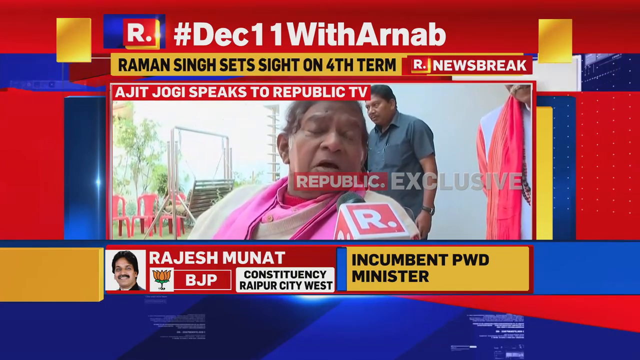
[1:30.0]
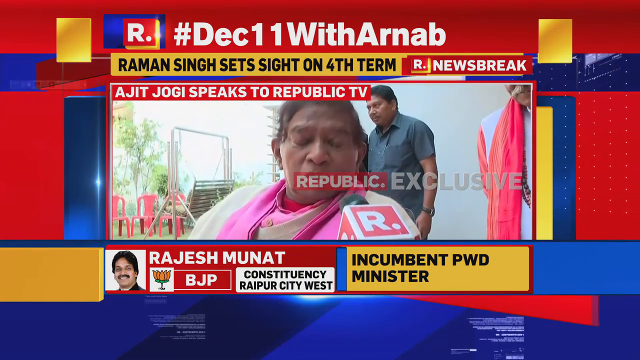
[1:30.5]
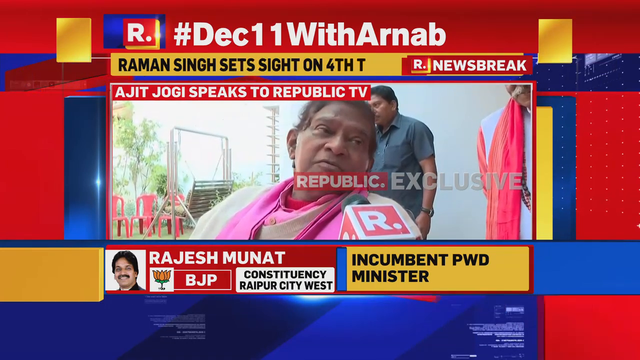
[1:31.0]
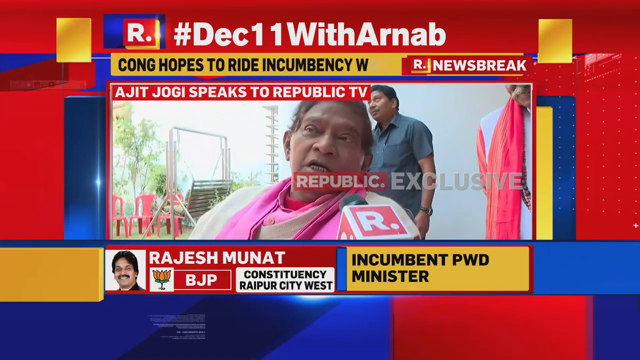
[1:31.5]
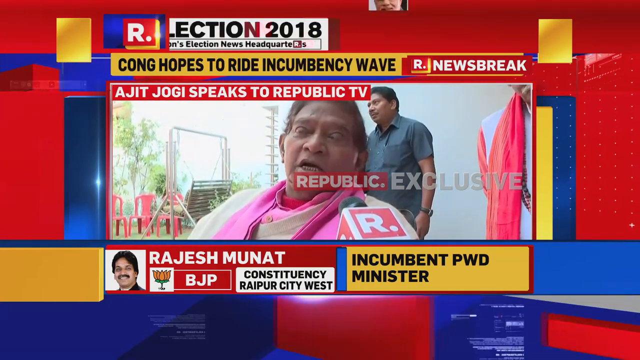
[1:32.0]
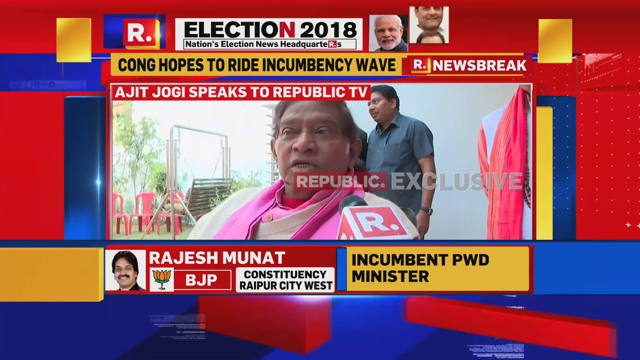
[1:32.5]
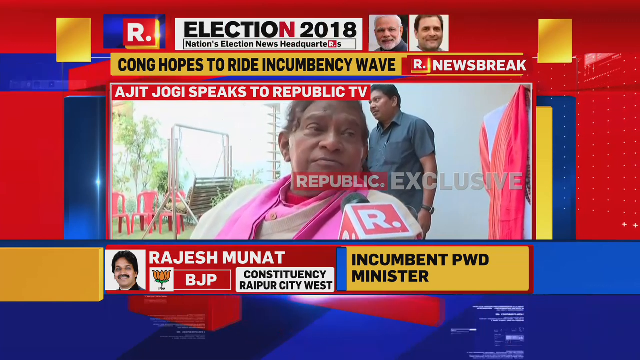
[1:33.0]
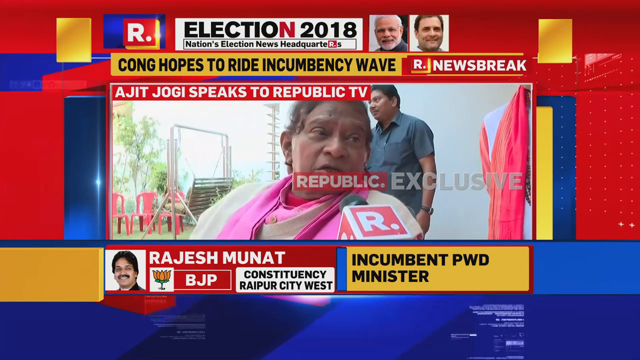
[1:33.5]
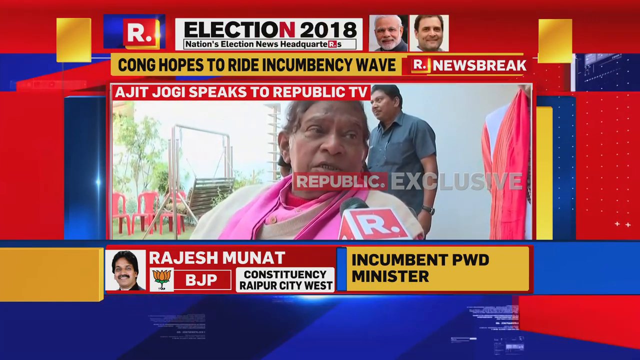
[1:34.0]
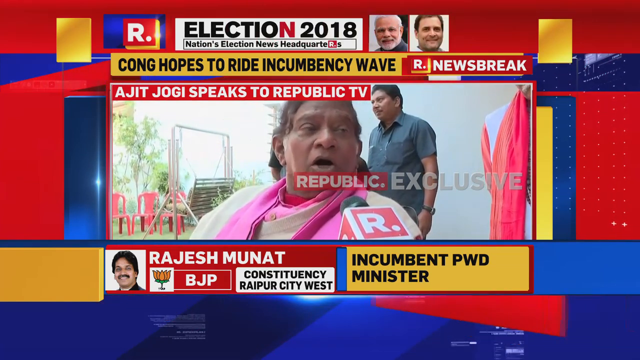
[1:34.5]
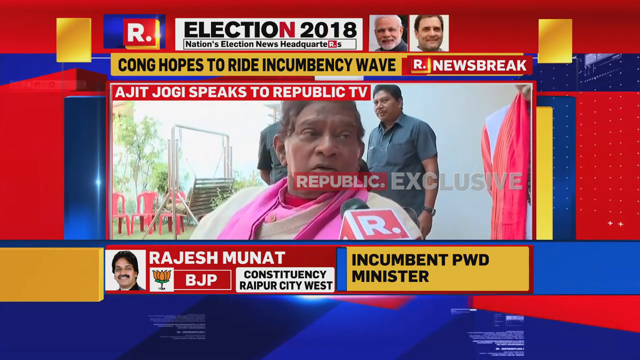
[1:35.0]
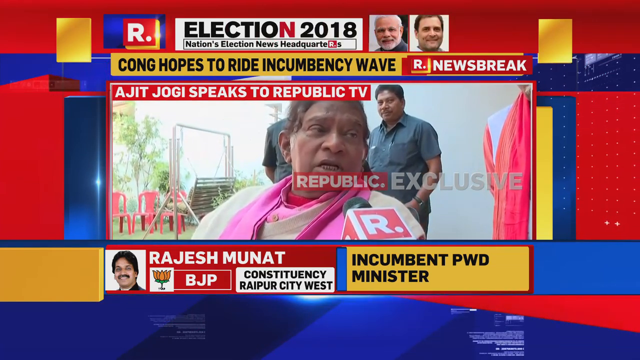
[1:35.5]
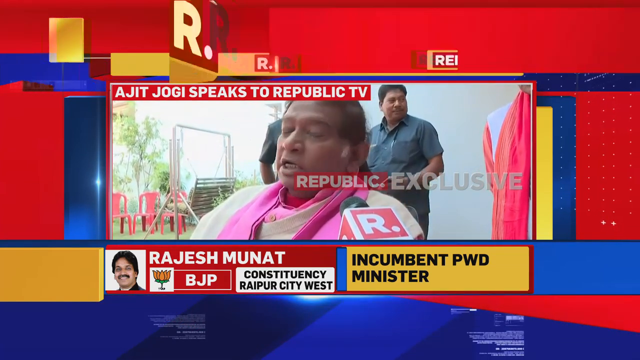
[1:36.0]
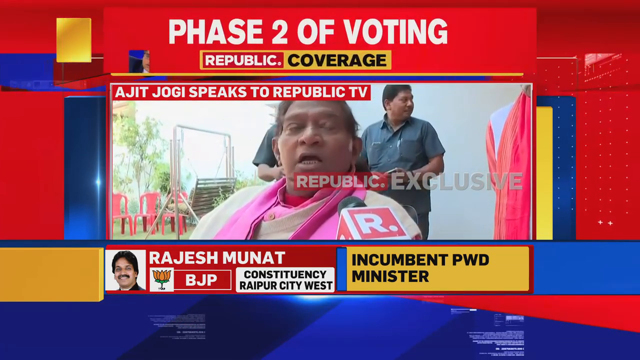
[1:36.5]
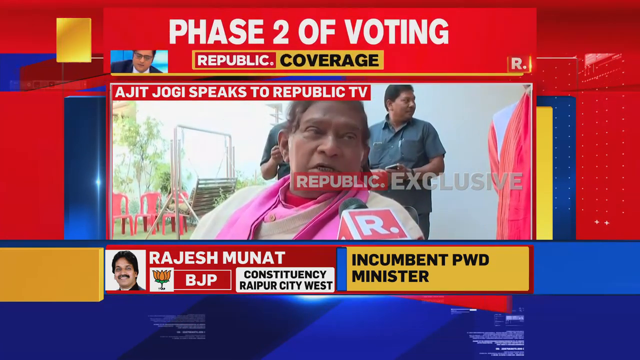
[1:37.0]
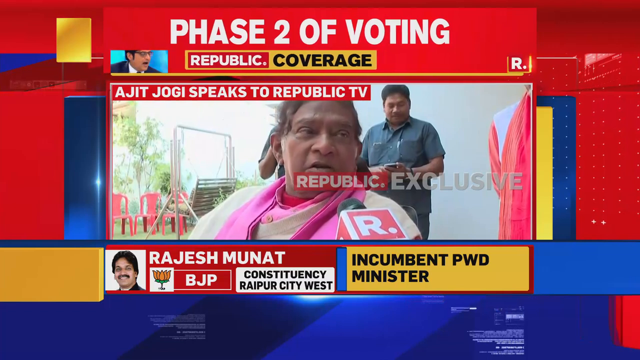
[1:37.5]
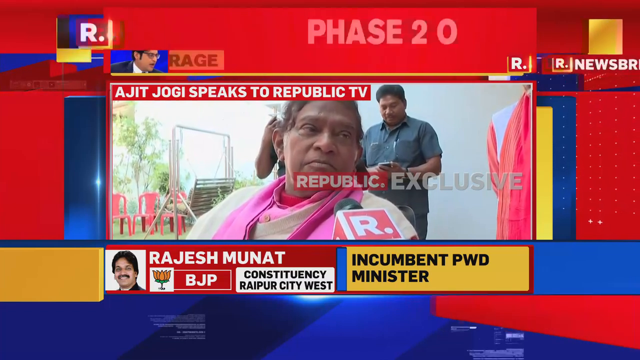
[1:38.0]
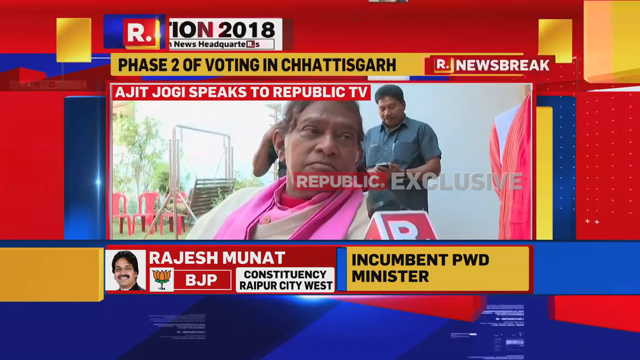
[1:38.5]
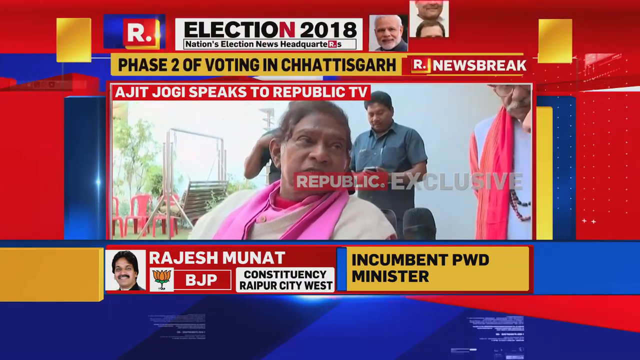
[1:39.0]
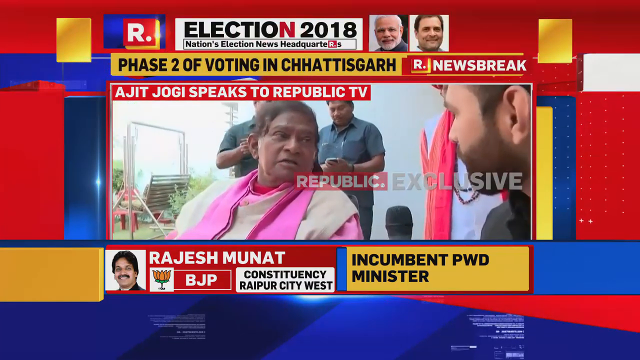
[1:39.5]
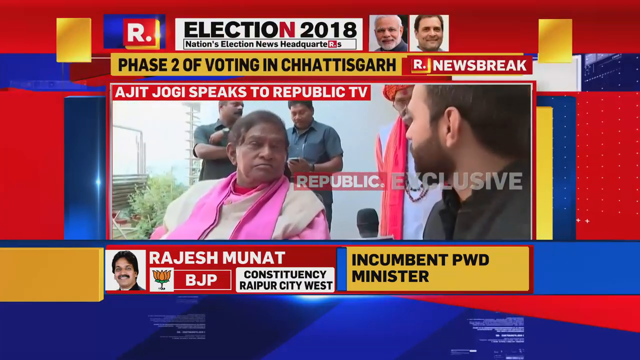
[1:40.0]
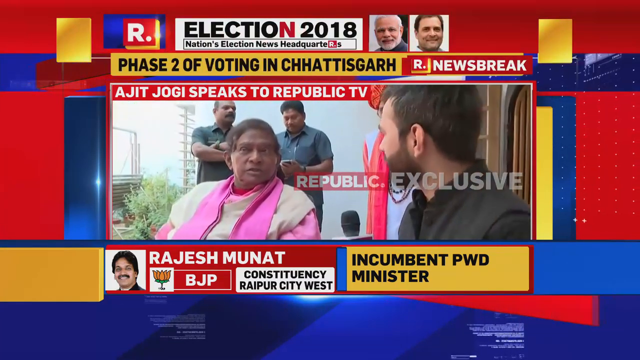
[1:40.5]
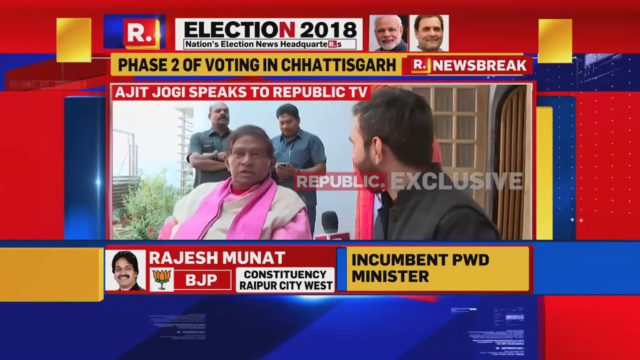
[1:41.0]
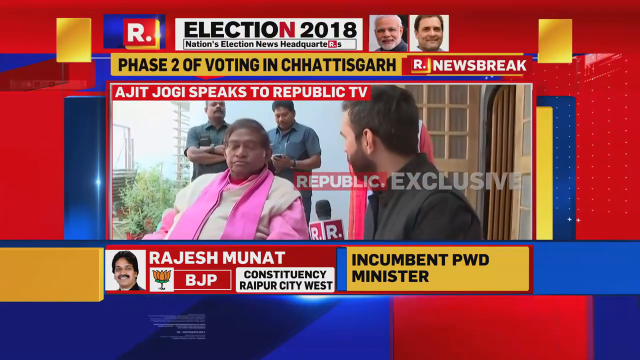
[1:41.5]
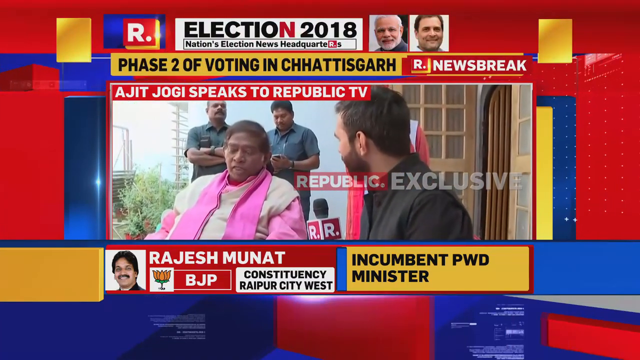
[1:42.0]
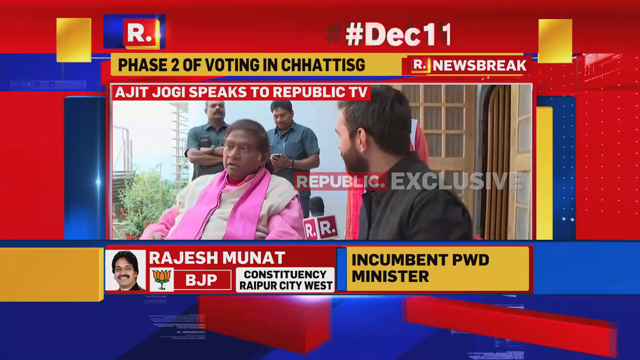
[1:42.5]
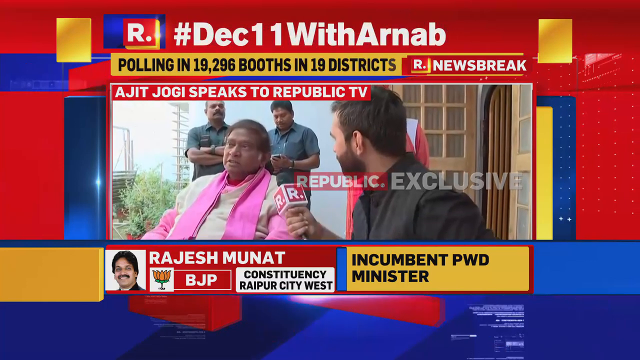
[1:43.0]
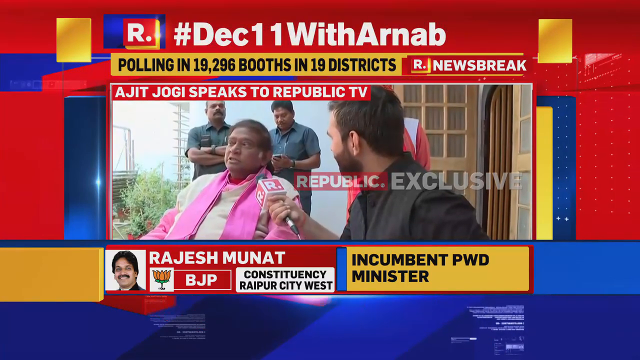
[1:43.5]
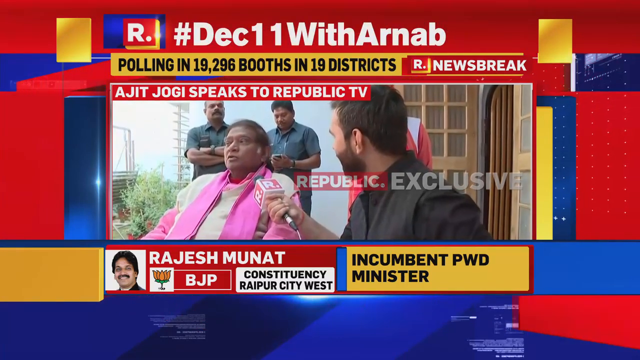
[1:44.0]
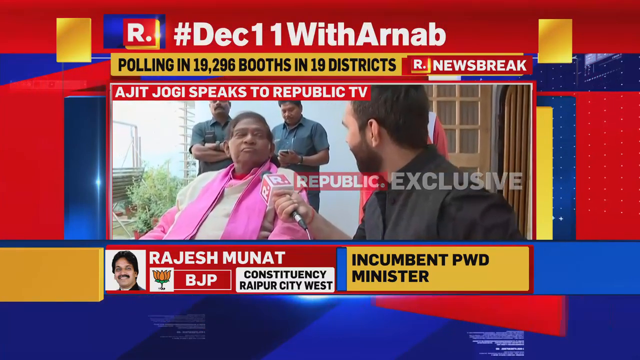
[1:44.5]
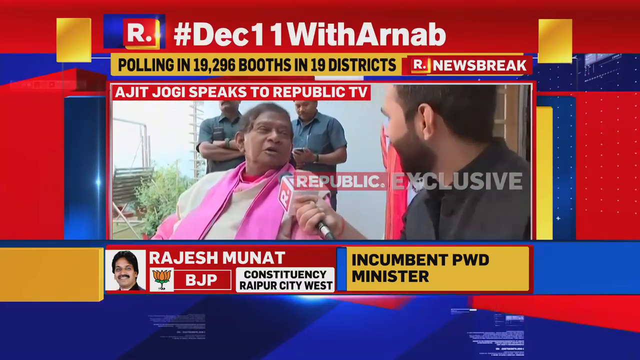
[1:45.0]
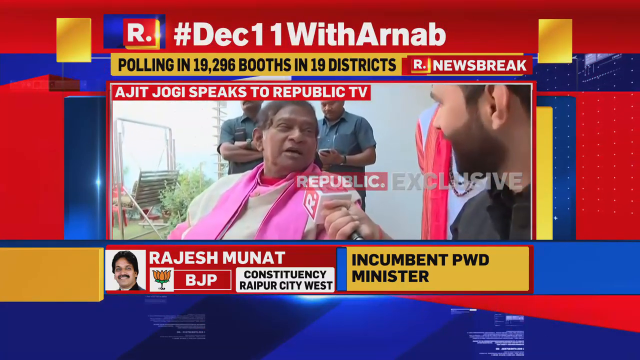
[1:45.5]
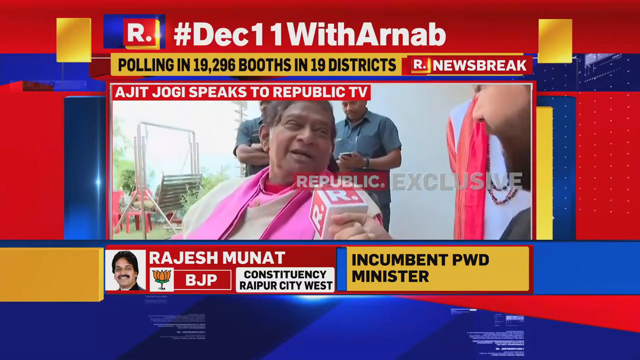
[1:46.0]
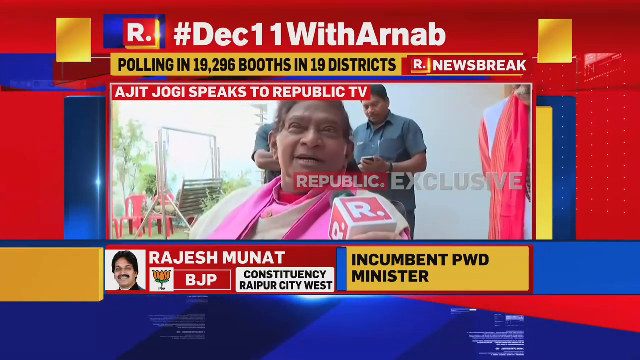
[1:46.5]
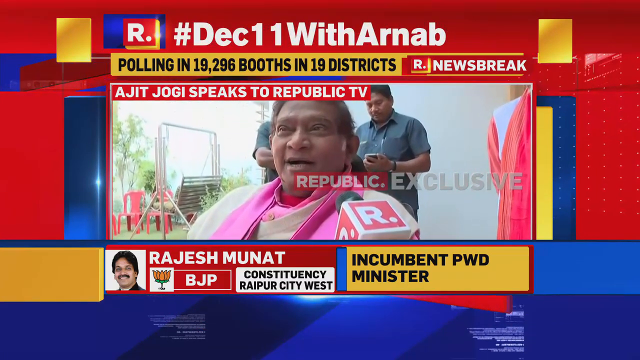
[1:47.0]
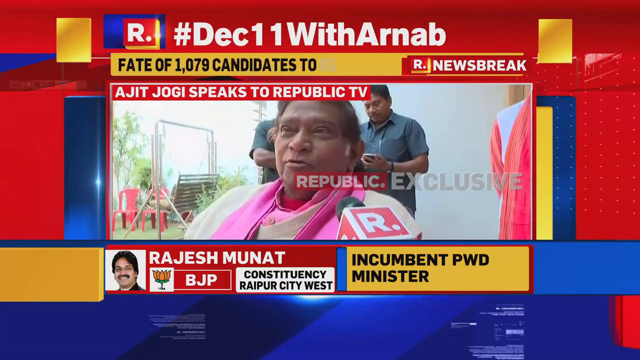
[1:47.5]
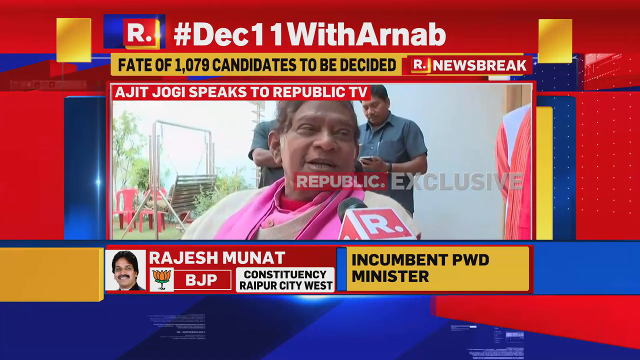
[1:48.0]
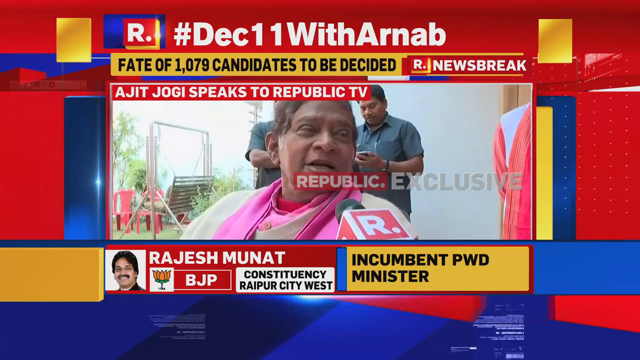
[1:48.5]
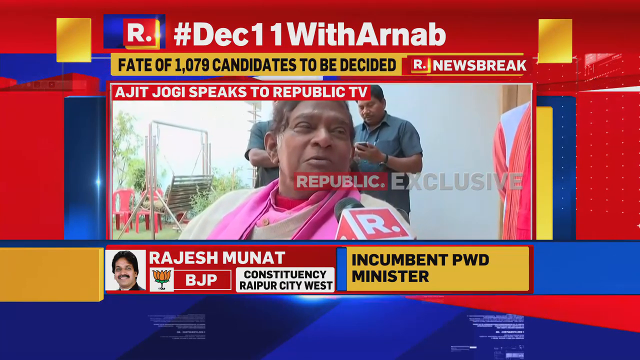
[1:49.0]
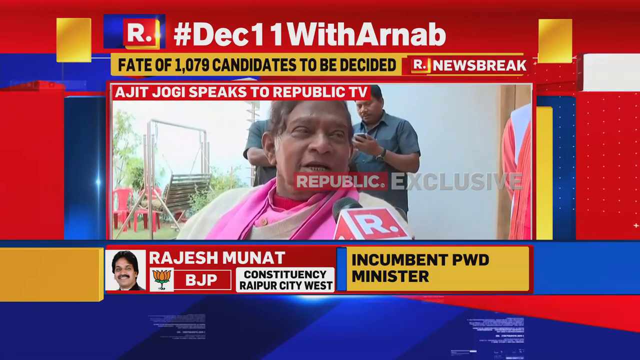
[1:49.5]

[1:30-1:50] In the small red text box at the lower left, where the Singh candidate was highlighted, a new person's face appears: a smiling man with a black mustache and short black hair. White text gives his name as "Rajesh Munat", with "BJP" underneath, and to the left is a little kind of flower logo in a white text box. At the lower right of that red text box, a white text box in black all-caps text says "CONSTITUENCY RAIPUR CITY WEST". To the right of that is a yellow text box that says, in black, "INCUMBENT PWD MINISTER". All of this is beneath the ongoing interview video above. There is lots of movement and change; at the top, even when the headlines are the same, they kind of drop in and out as new text appears. The top headline apparently stays the same, and the top now has the white text "#DEC11WithArnab".